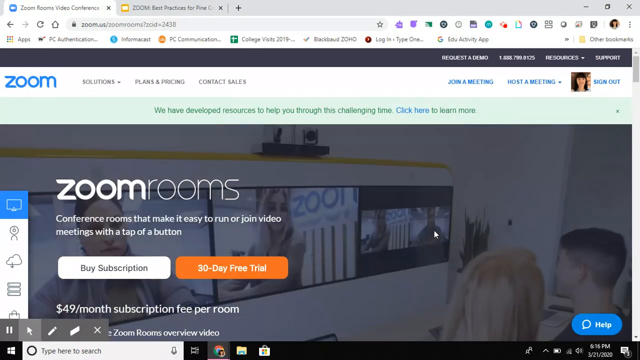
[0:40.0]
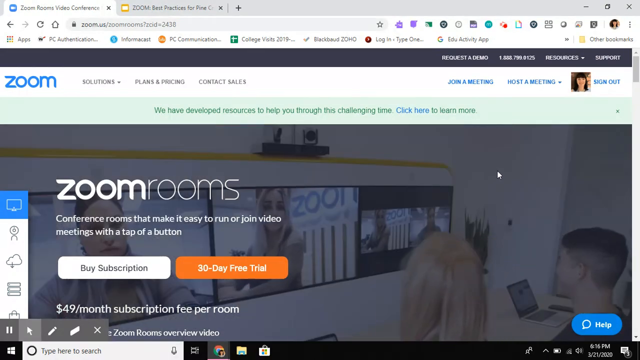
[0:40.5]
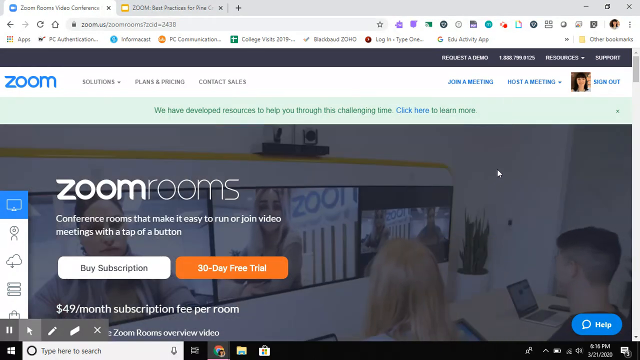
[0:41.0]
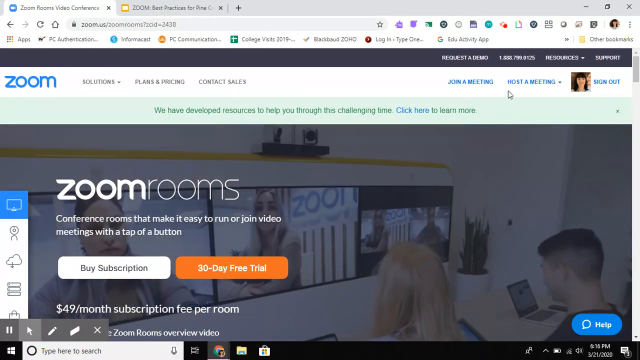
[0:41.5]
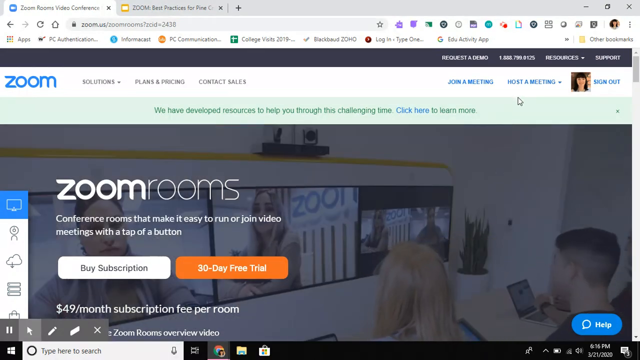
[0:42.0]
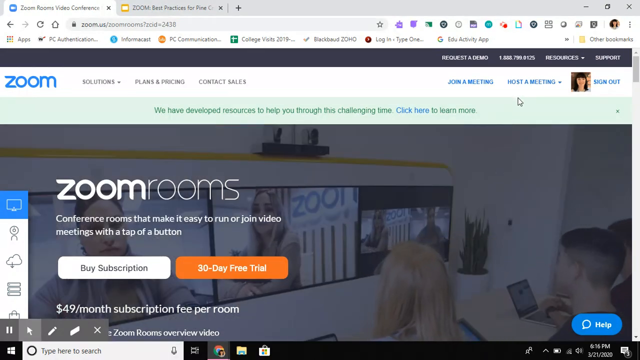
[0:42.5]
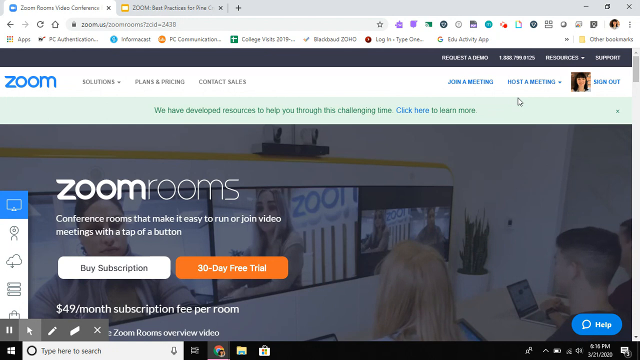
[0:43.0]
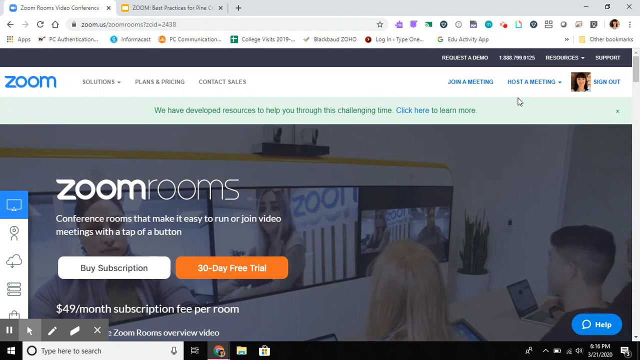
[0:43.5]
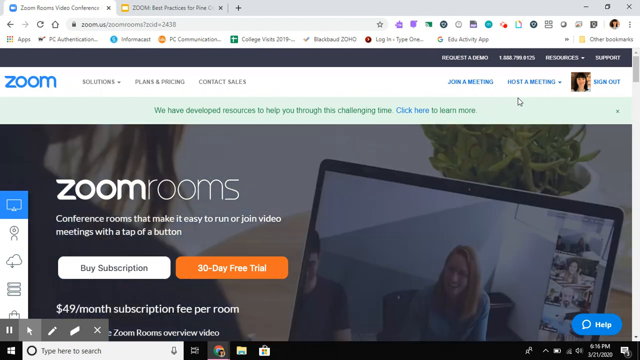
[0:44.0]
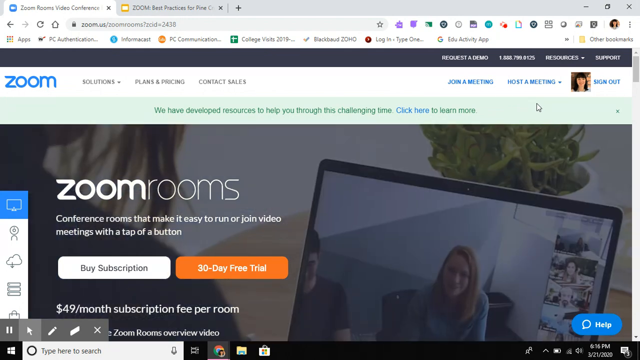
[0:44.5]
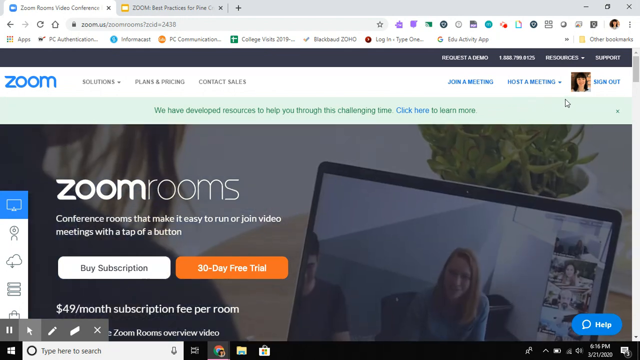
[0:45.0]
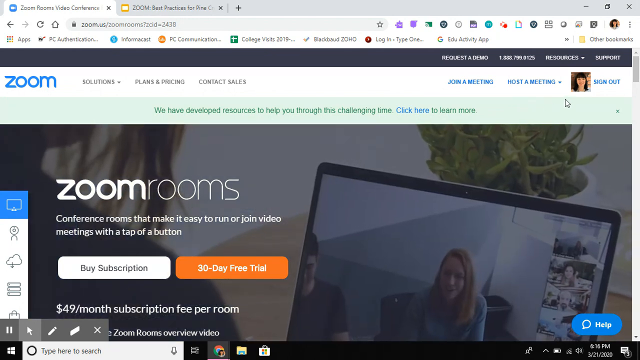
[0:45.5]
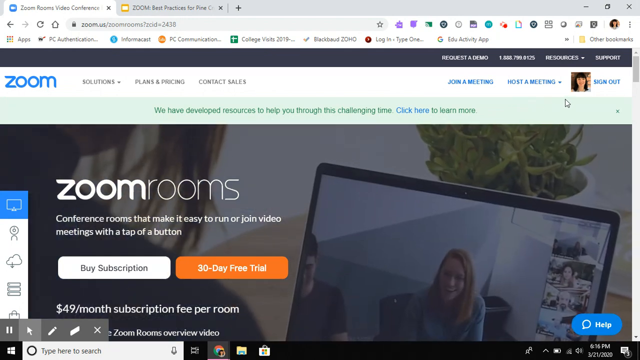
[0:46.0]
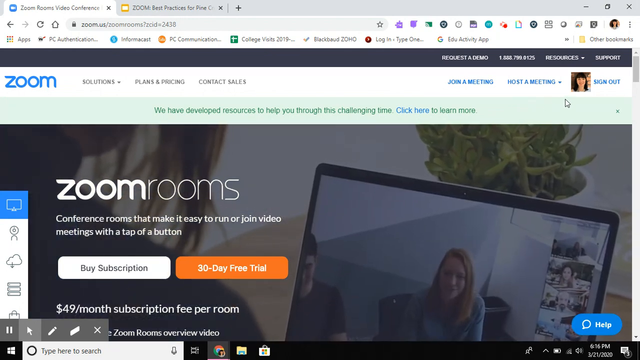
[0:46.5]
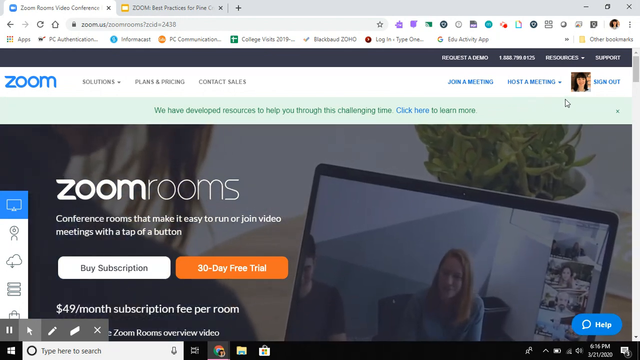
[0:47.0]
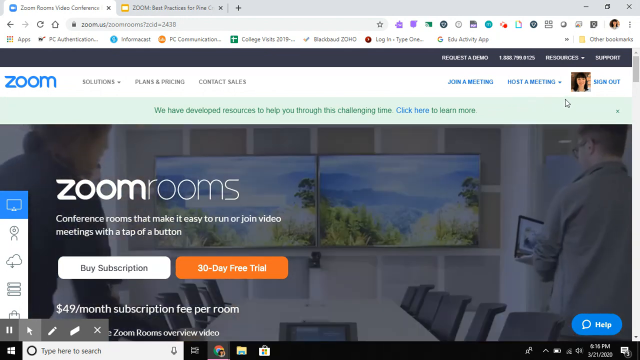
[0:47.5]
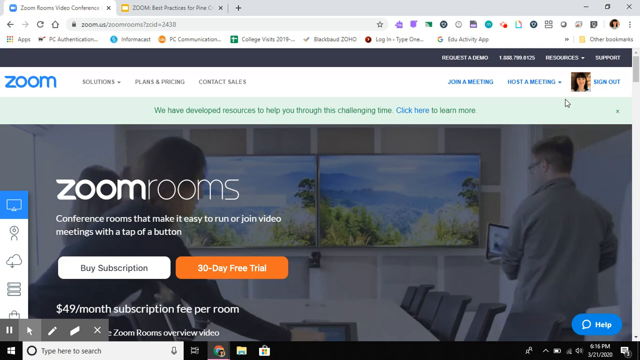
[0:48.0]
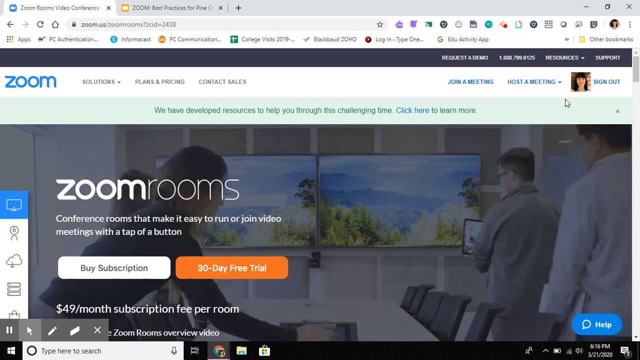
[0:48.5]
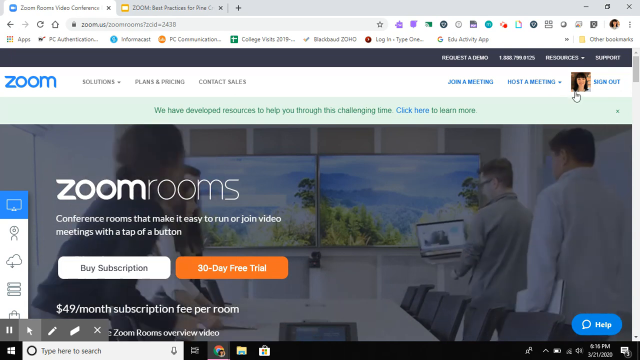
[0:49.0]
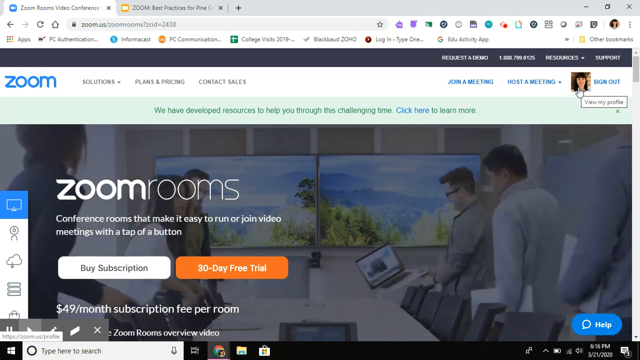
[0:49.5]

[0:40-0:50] The three monitors have thin black bezels and are on, showing a total of four people. The first two monitors on the left side display two females in their own places, and the third monitor on the right side displays two people side by side in one screen. The female in the middle is in a Zoom office, with "zoom" written in blue on the white wall behind her, and the first female is on the left side. These two females are in a meeting with the people in the office, who watch them on the monitor screens, probably having a meeting about something.